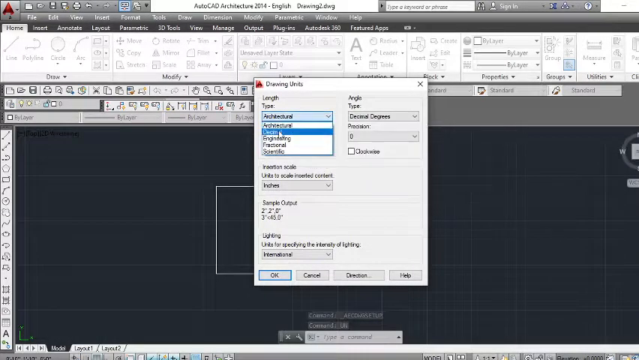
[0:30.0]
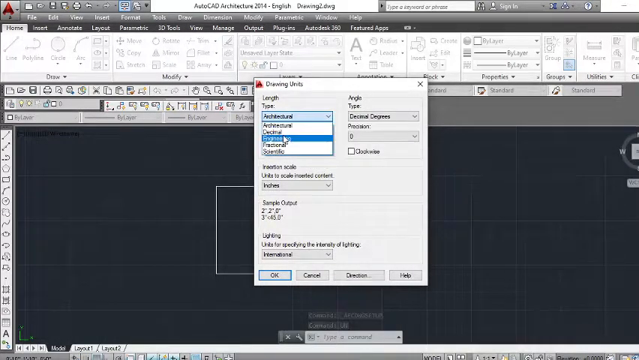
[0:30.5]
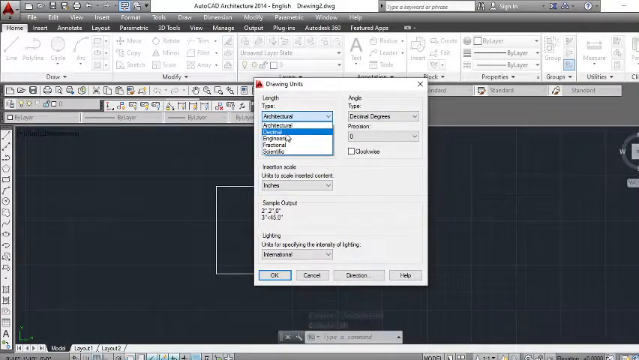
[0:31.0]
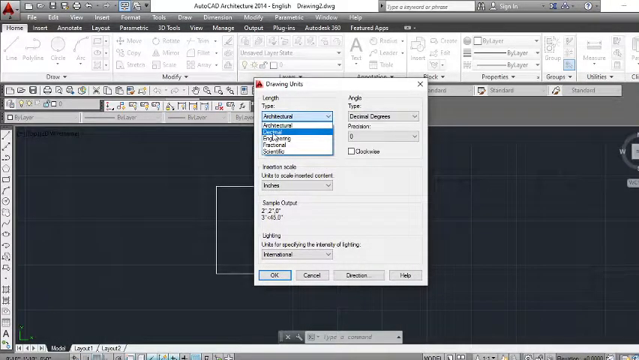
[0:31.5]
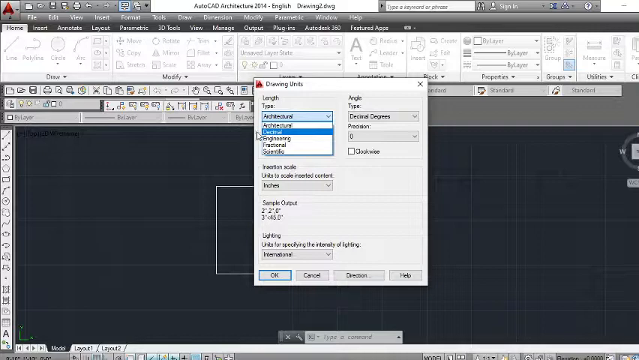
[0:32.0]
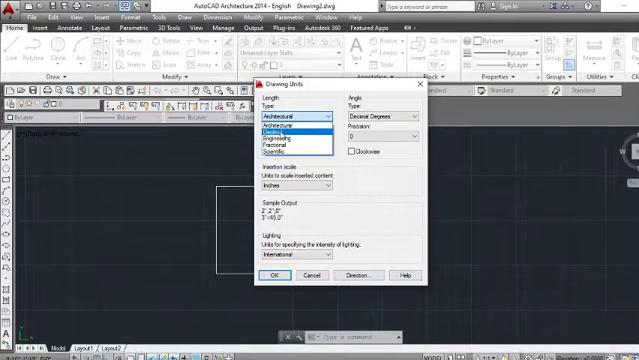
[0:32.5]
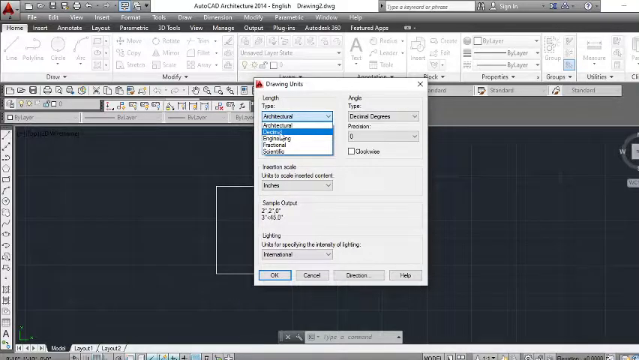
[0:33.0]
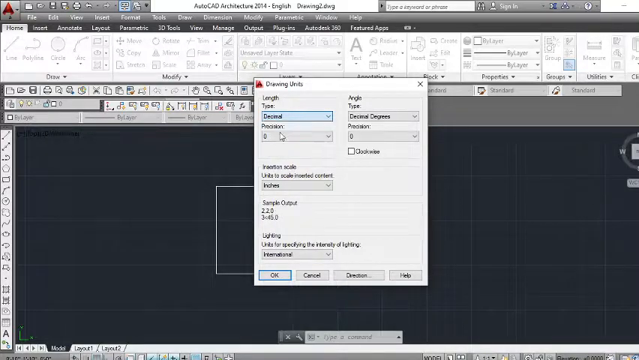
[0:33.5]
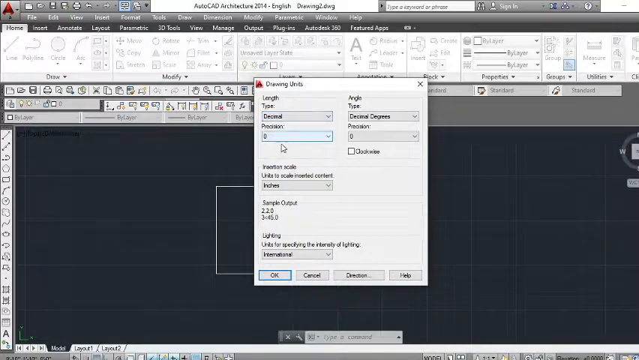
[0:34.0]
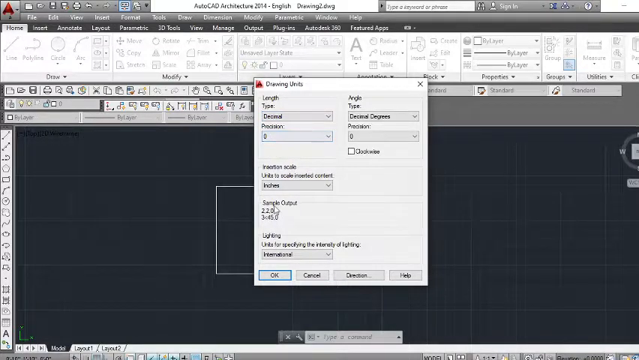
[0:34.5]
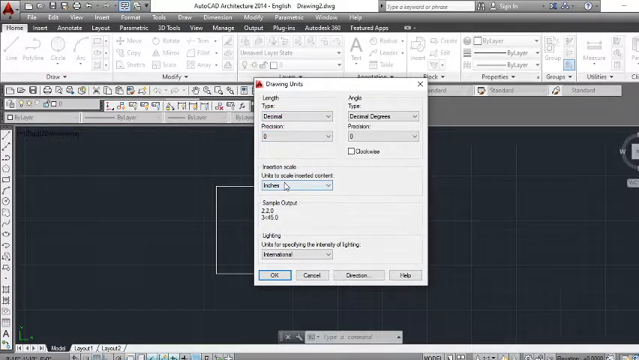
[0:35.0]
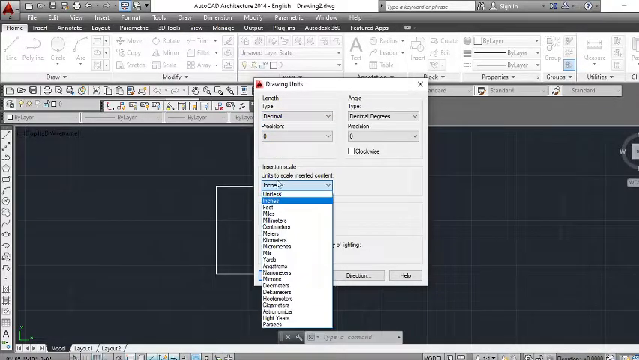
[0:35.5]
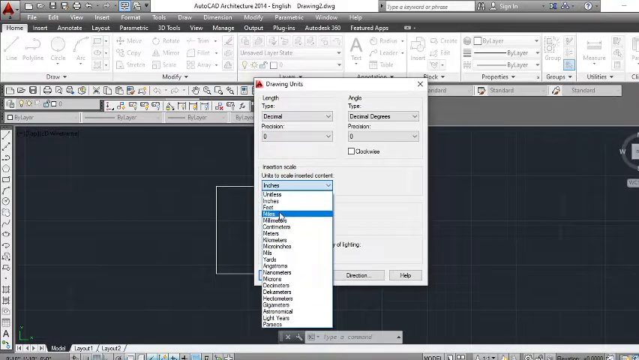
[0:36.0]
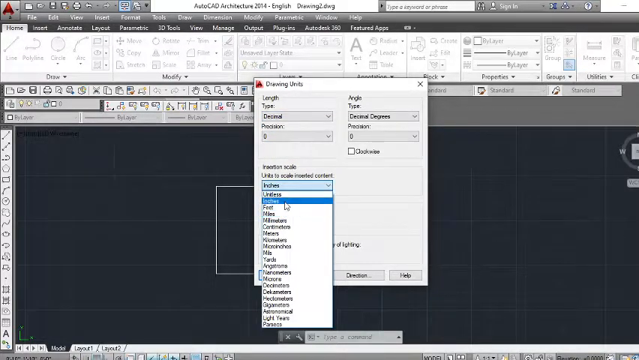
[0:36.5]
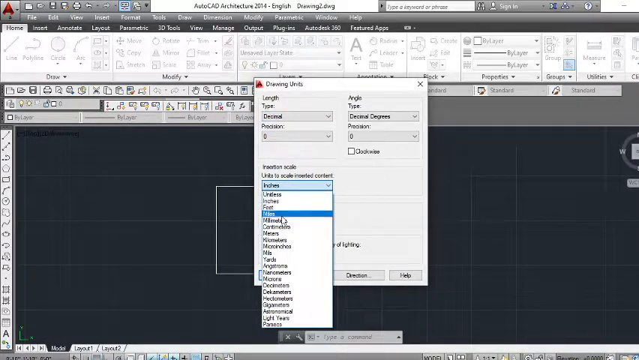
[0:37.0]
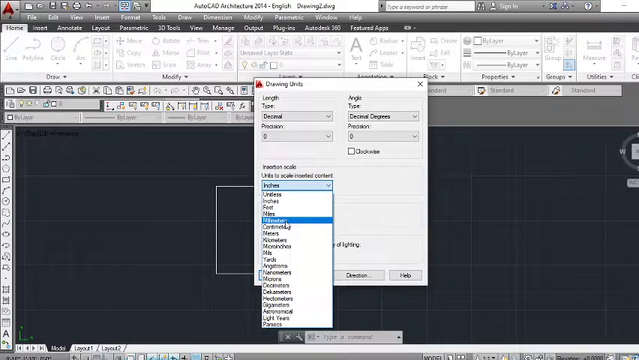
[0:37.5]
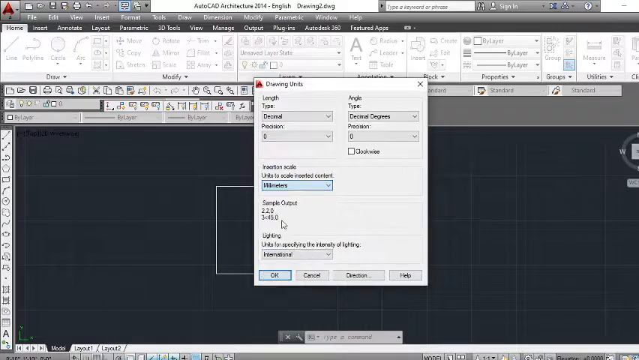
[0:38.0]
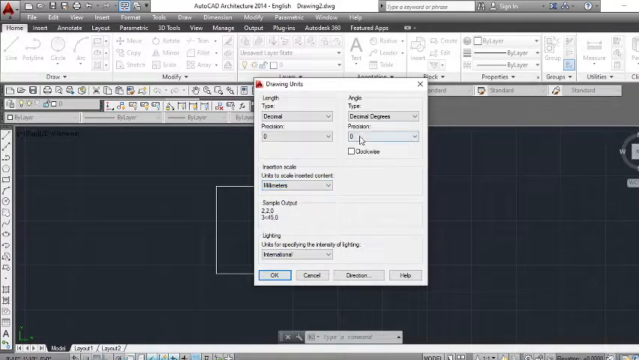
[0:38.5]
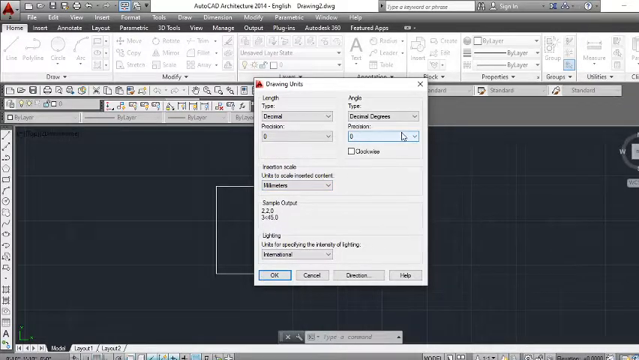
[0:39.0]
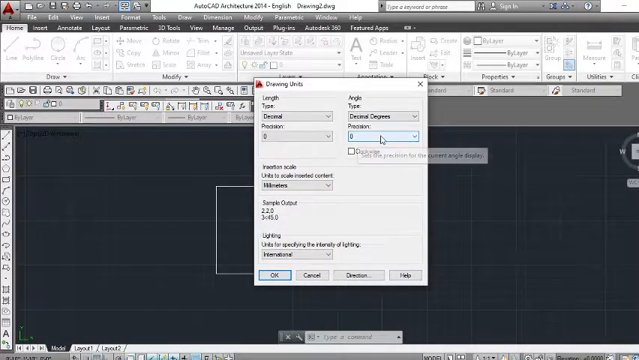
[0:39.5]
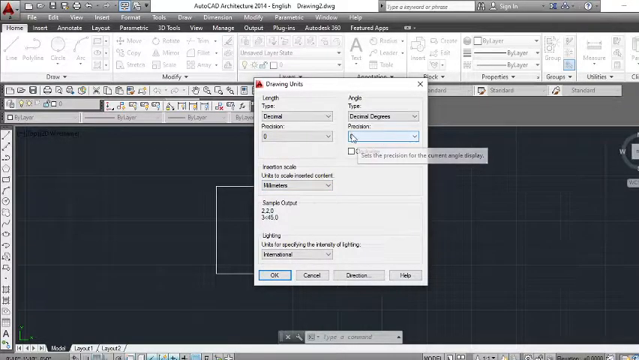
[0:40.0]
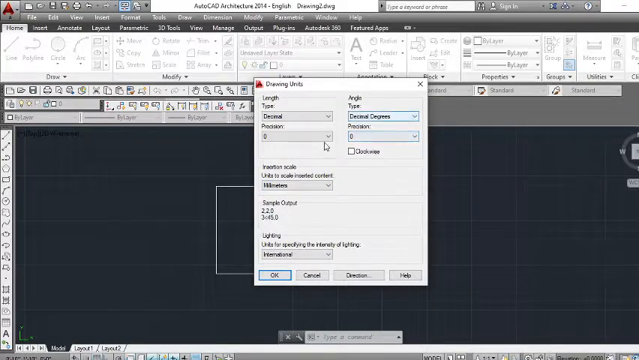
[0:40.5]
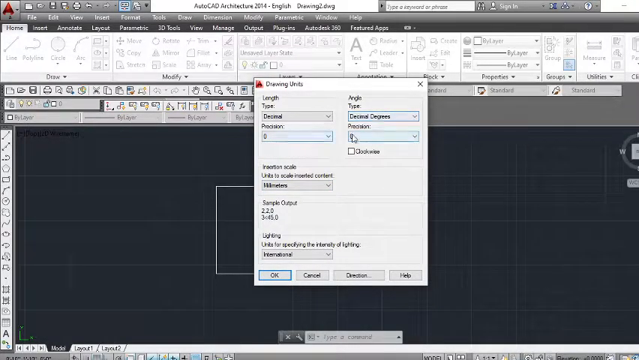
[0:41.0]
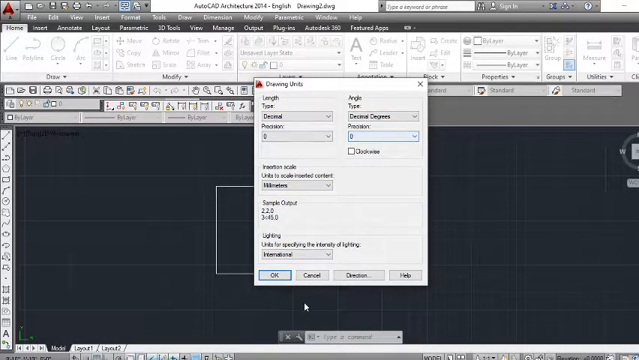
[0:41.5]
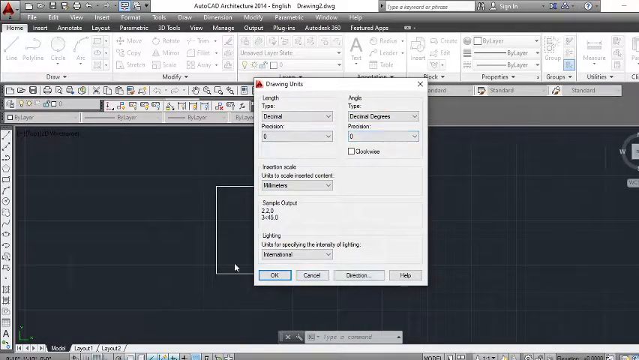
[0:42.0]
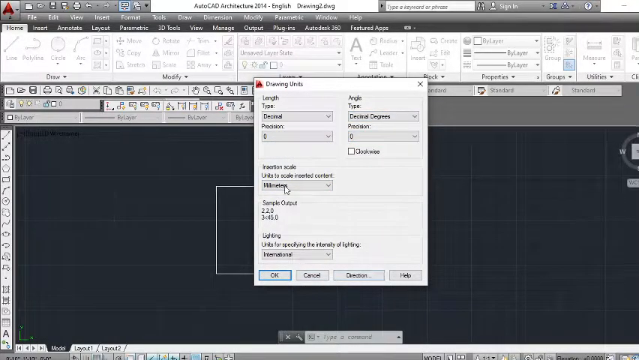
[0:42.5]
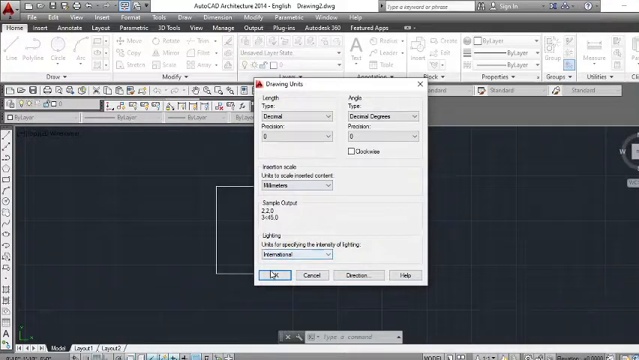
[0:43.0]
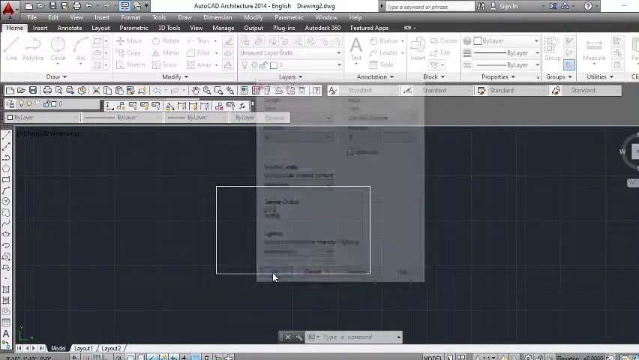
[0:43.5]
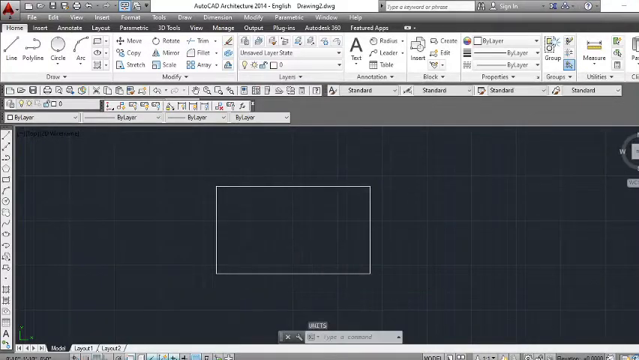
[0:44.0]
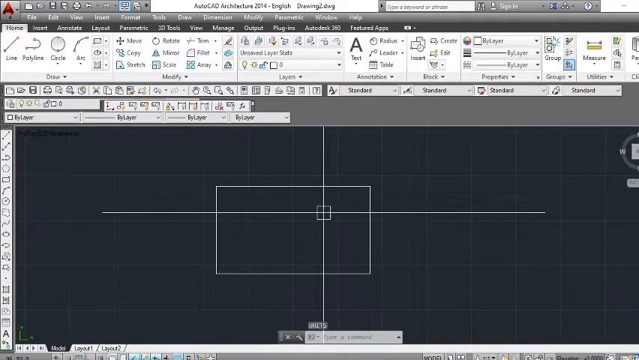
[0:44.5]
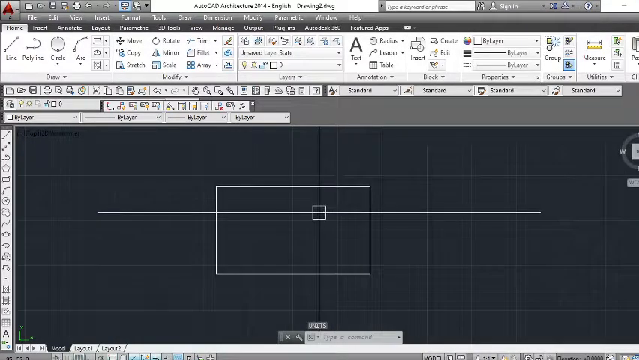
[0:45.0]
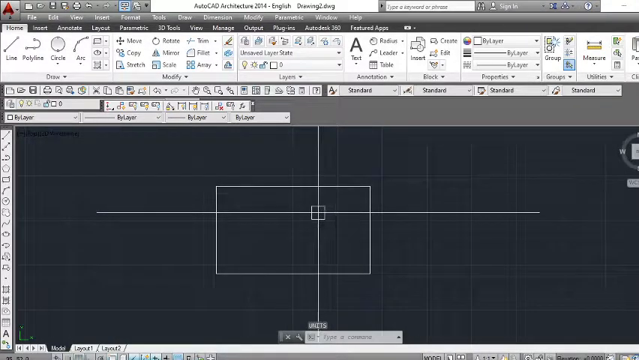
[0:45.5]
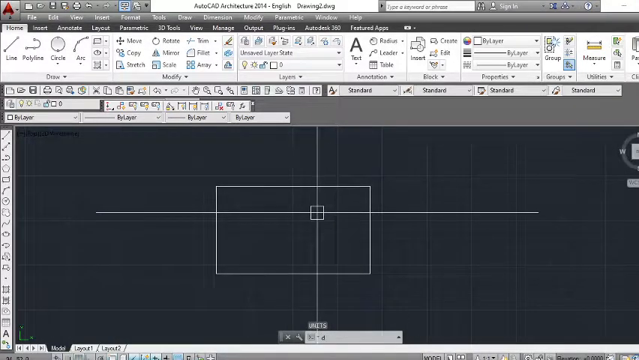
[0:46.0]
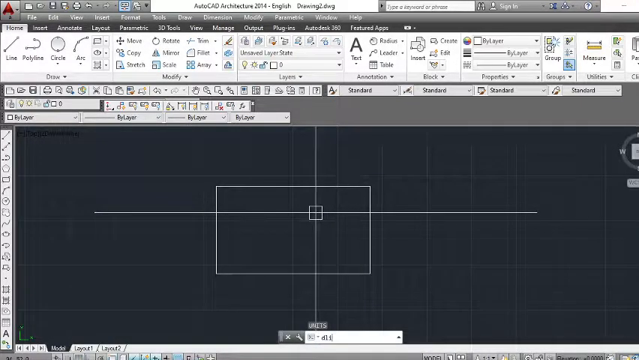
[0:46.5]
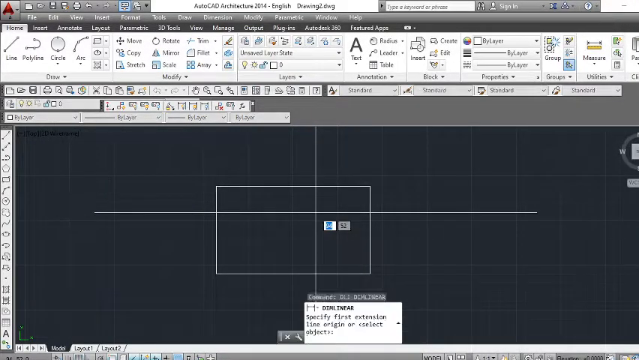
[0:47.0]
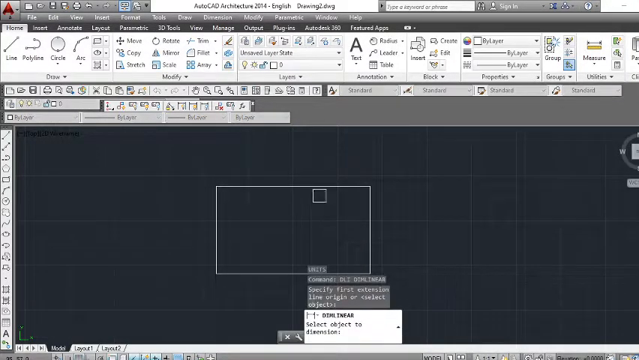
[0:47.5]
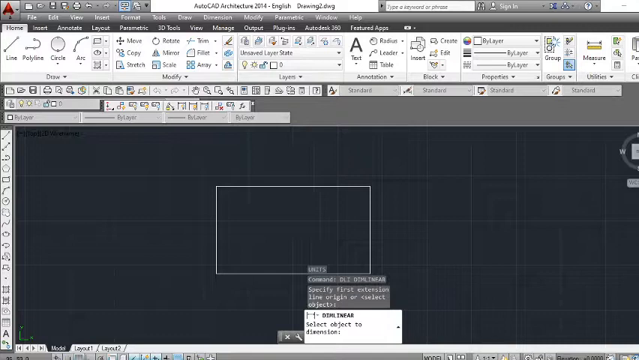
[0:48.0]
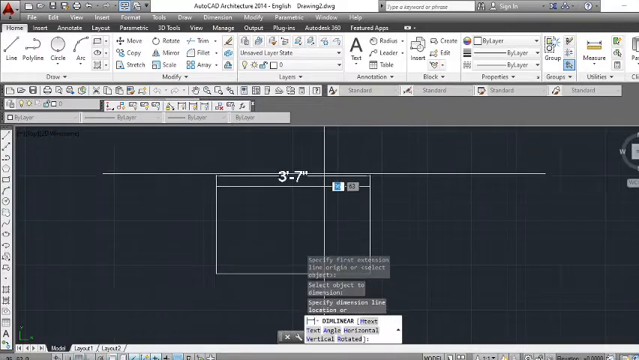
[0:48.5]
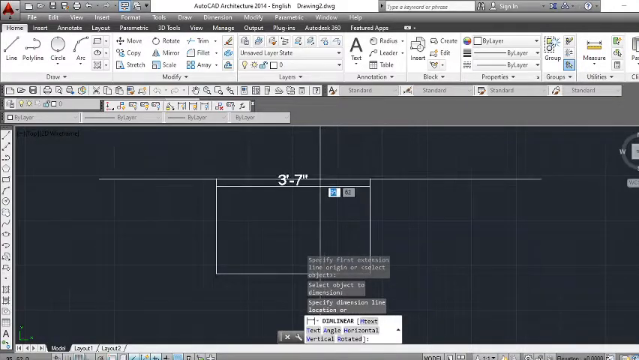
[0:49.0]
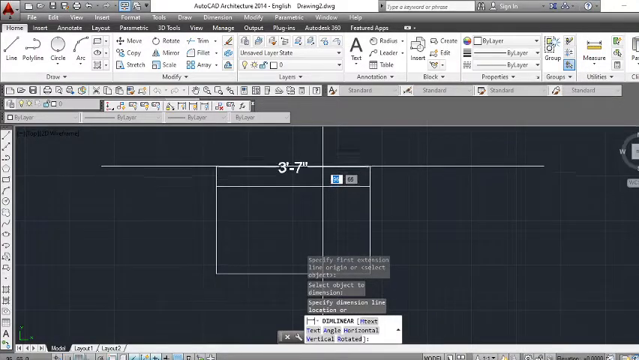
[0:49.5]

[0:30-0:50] The screen of a desktop or laptop shows what looks like a notepad-like program for drawing and making images. A black area is open, with a square or rectangle drawn in a white line. At the top left are different line options, including a diagonal line and a curved line. A drop-down menu is open; the mouse moves over the different options, selects one, shows a different part of the menu, and then clicks OK. A cross appears on the screen, and the numbers 3 and 7 show up, apparently meaning 3 foot and 7 foot, so someone may be designing something.